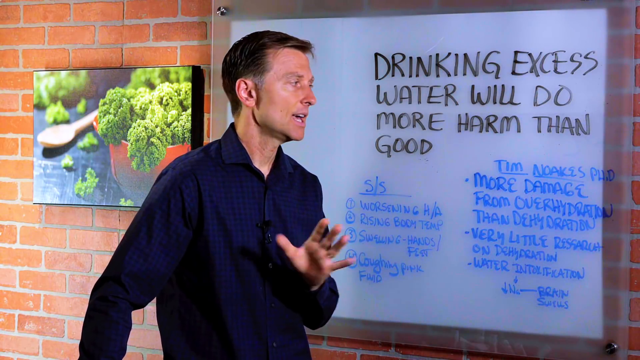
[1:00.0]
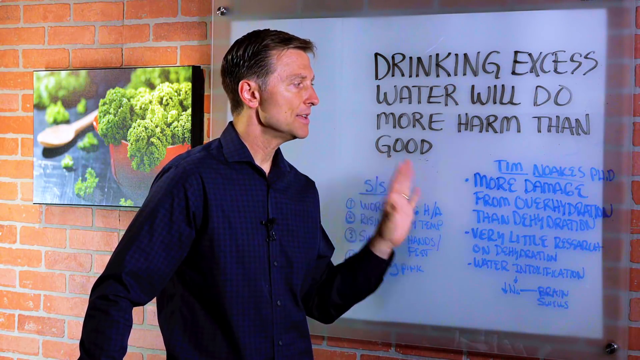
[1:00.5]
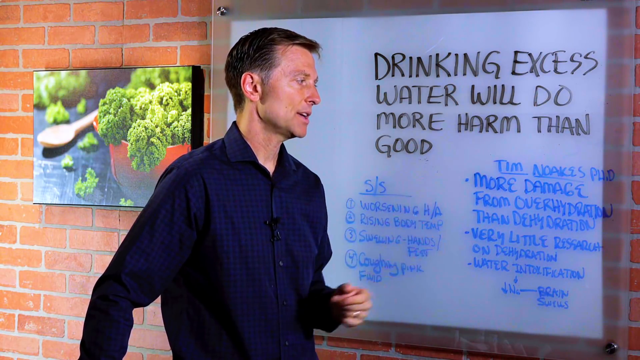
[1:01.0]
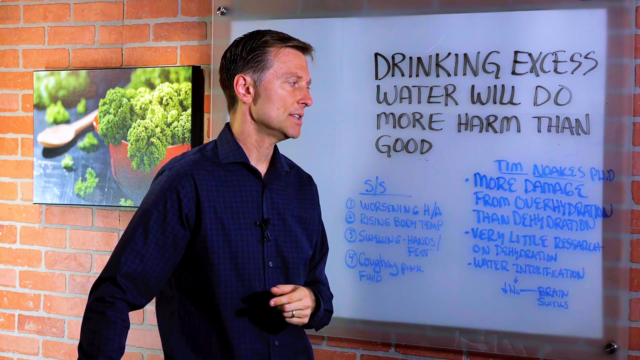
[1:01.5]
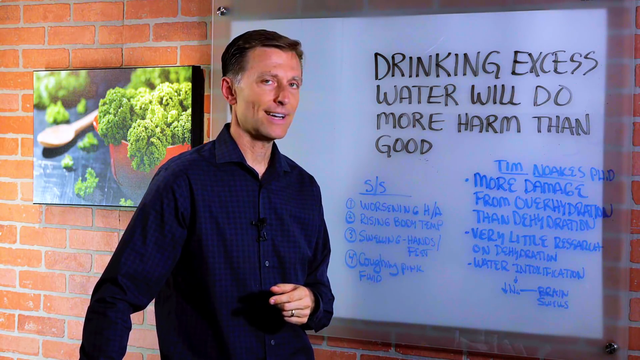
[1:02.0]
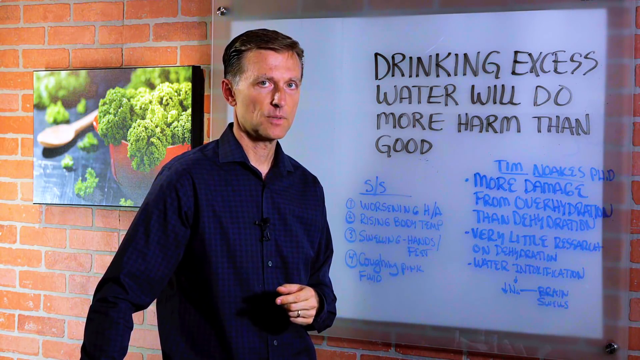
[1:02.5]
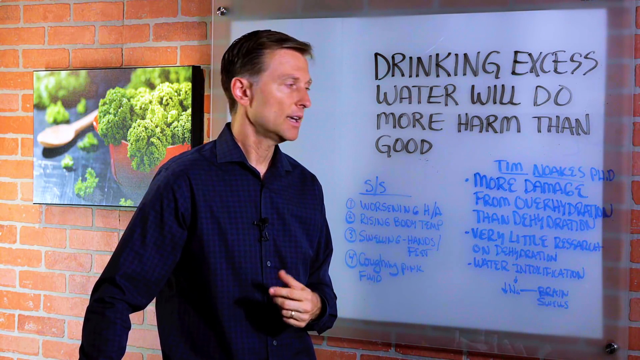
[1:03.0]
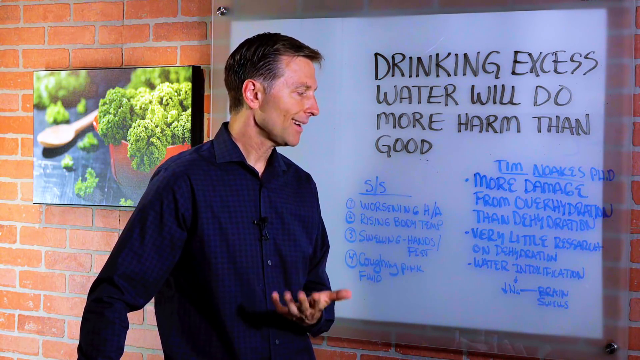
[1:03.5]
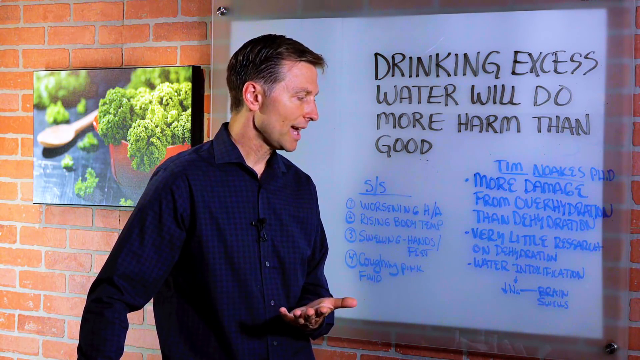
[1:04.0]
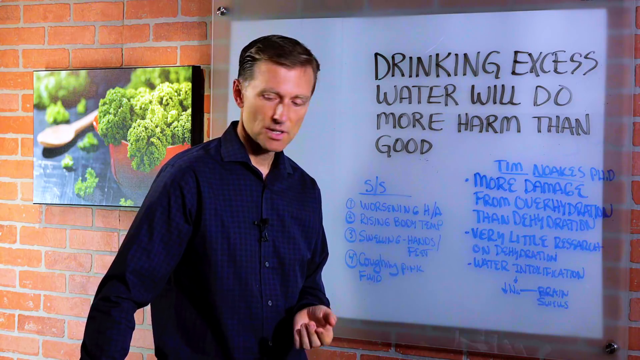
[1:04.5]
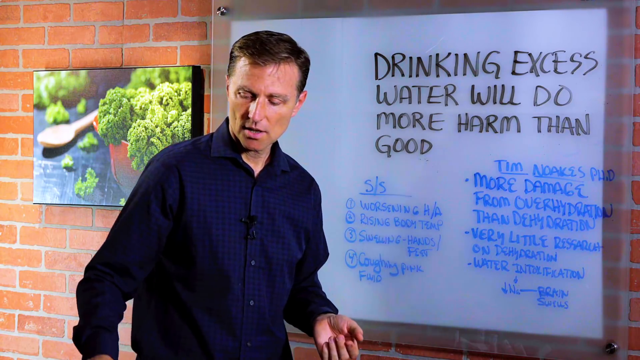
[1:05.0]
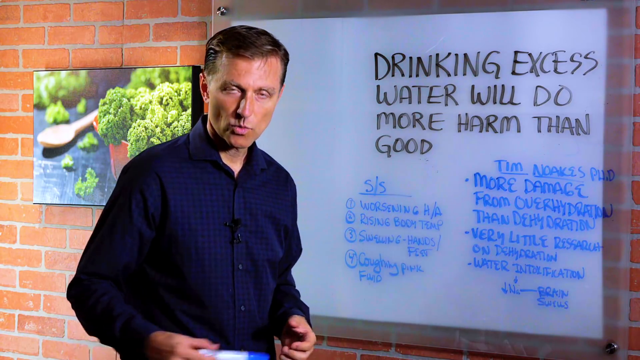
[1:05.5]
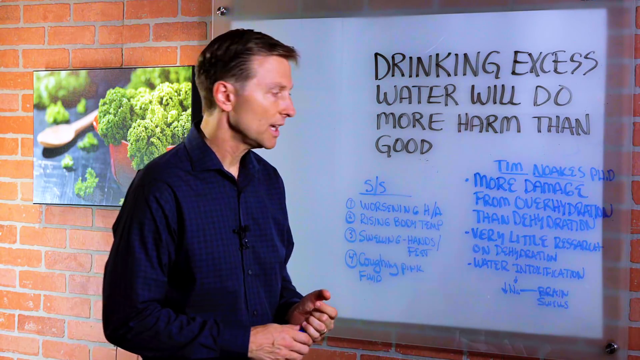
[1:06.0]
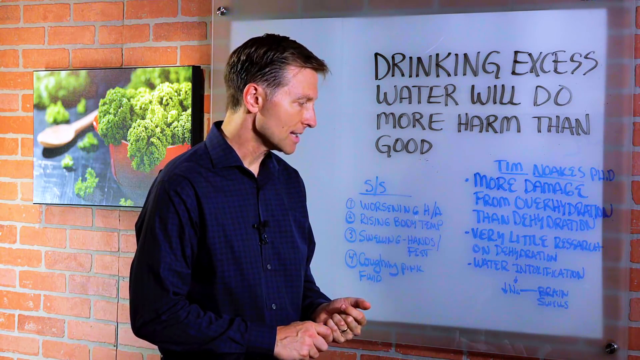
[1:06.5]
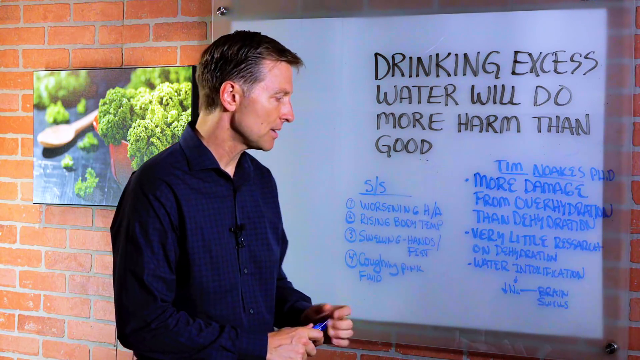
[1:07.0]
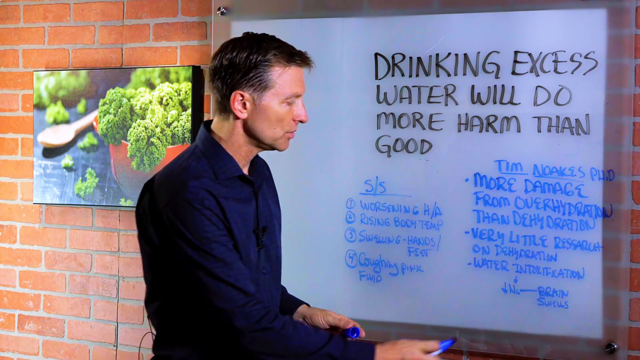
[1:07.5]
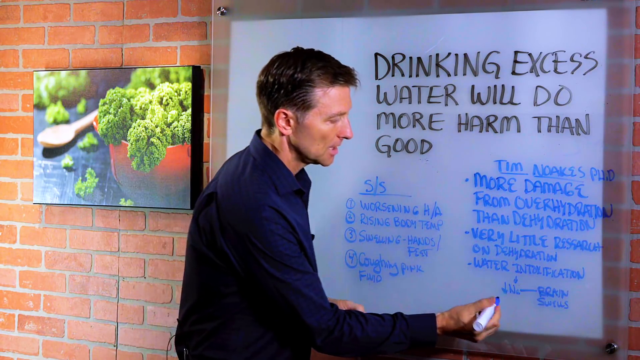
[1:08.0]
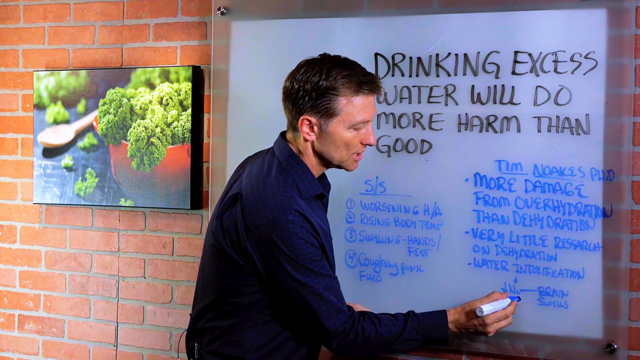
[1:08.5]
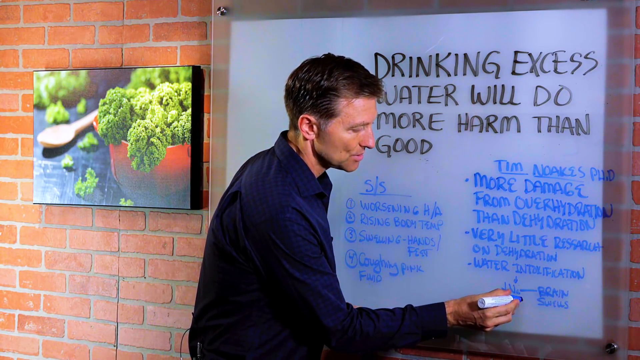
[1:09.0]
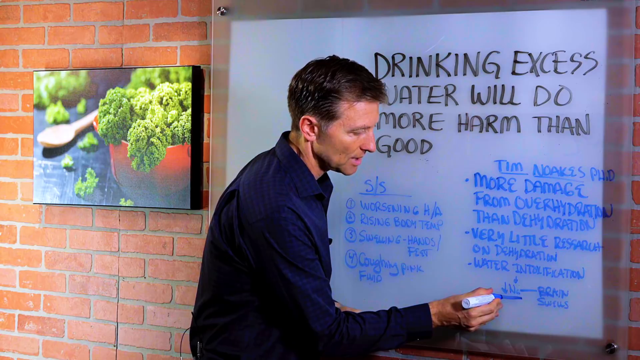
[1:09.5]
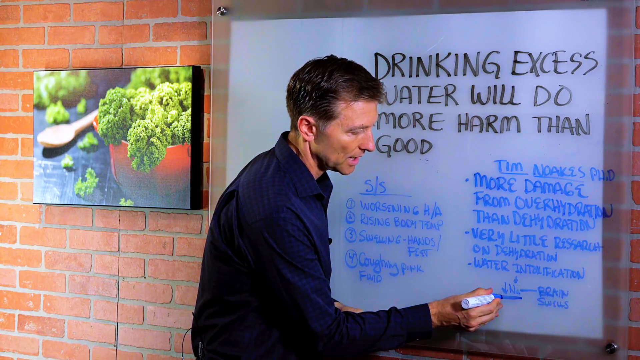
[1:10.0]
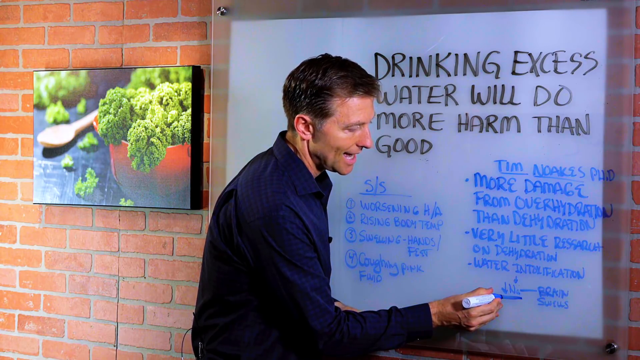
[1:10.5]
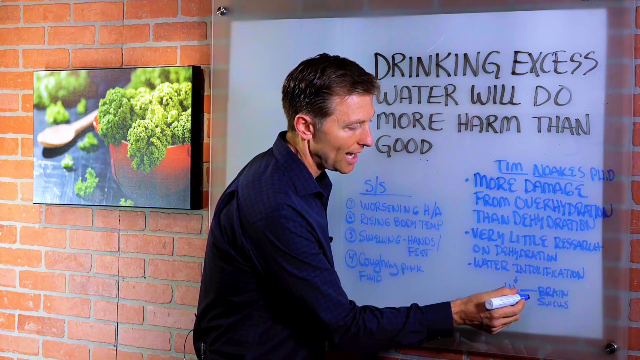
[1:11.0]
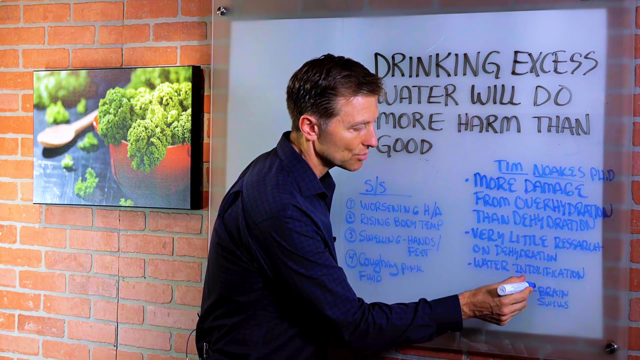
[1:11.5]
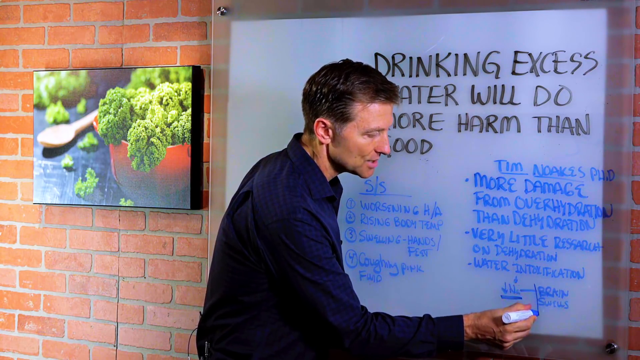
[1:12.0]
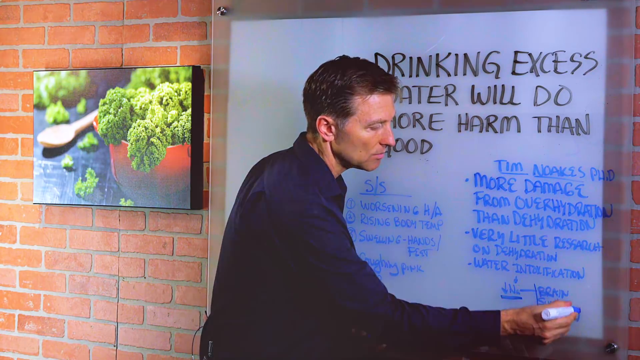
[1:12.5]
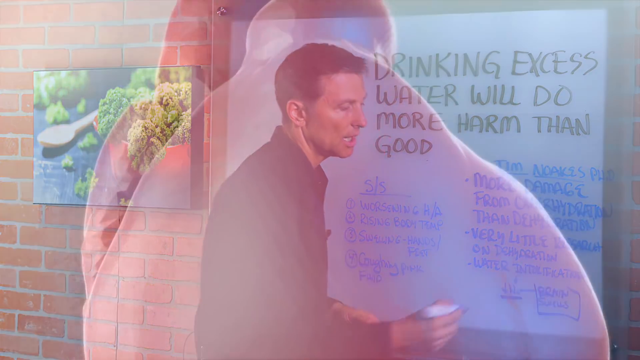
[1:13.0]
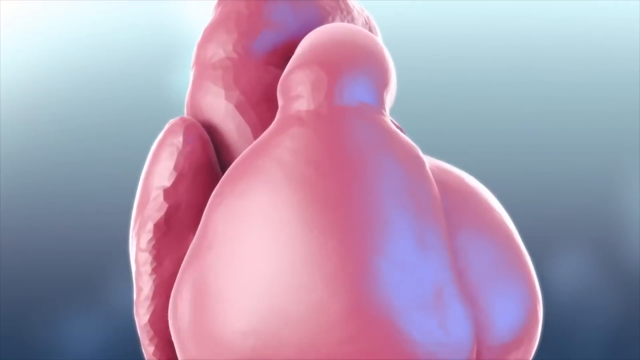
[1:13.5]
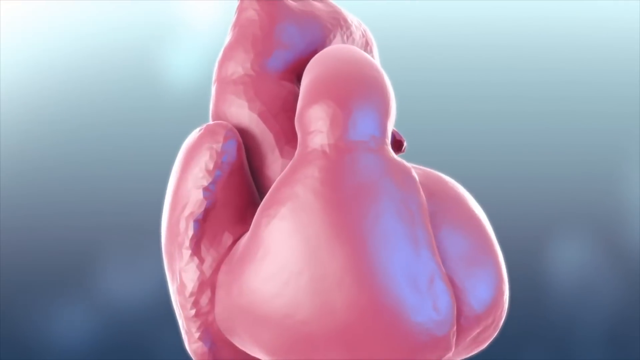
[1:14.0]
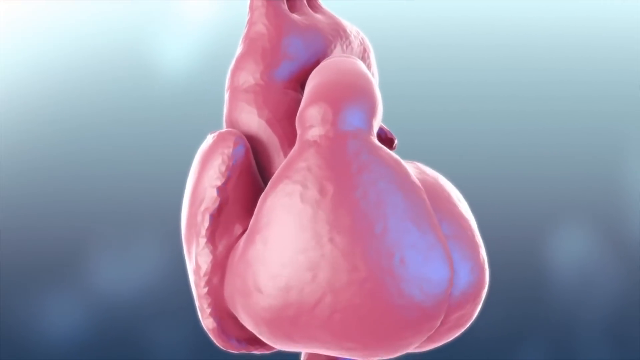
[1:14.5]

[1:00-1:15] The man in front of the whiteboard goes over the final point. He grabs a blue Sharpie marker and, in the right column under the last point, "water intoxication," boldly underlines the "No" with the downward-facing arrow in blue, then draws a square around the words "brain swells" next to it. The video switches to a graphic design of what looks to be a human heart: a large pink heart, animated so that it is beating and moving. It looks pretty healthy, full and smooth, and bright light pink in color.